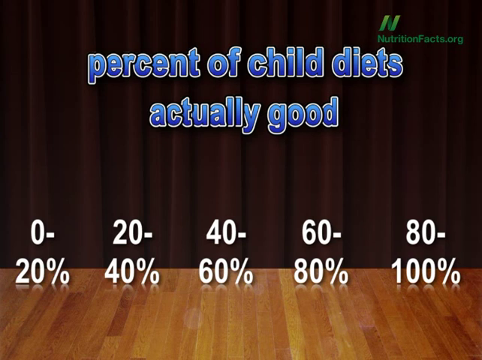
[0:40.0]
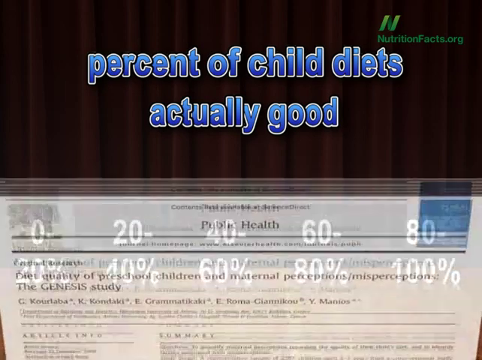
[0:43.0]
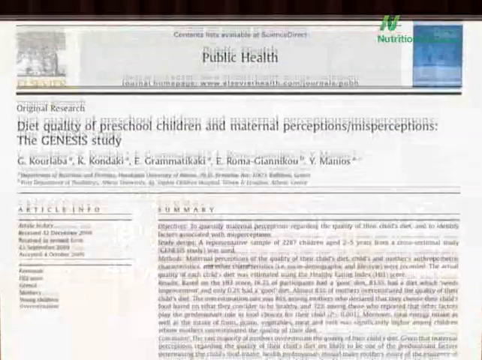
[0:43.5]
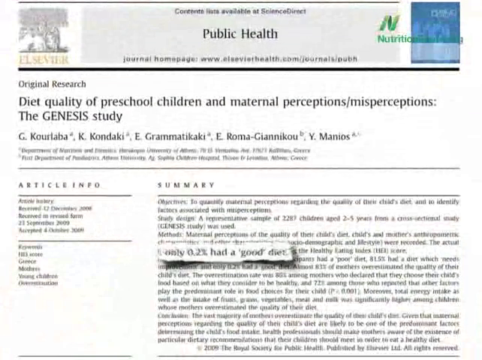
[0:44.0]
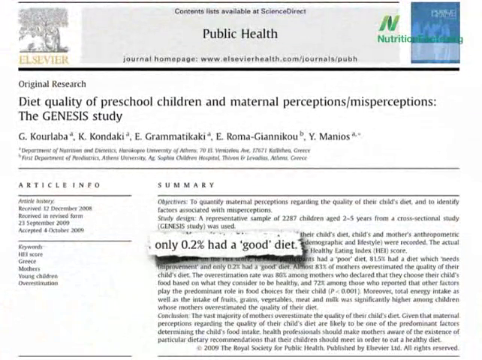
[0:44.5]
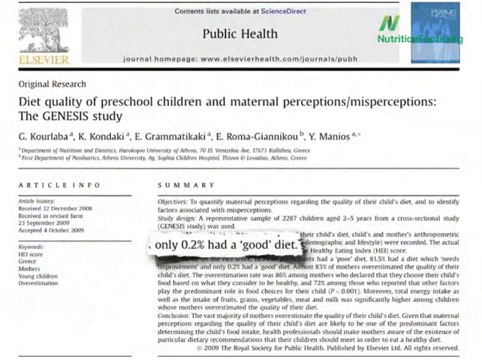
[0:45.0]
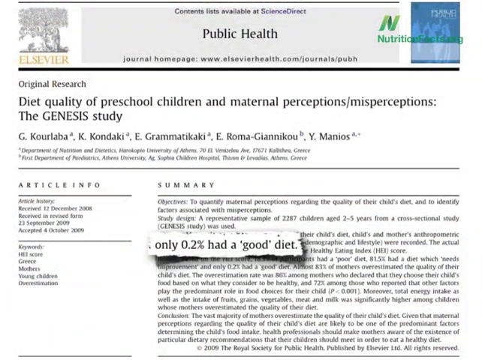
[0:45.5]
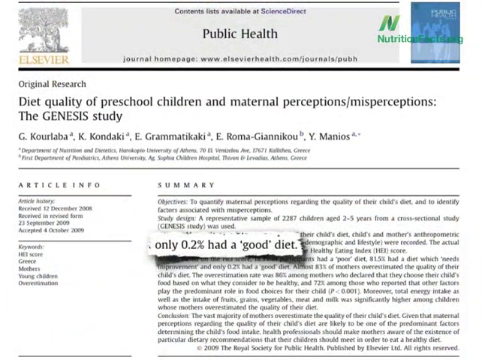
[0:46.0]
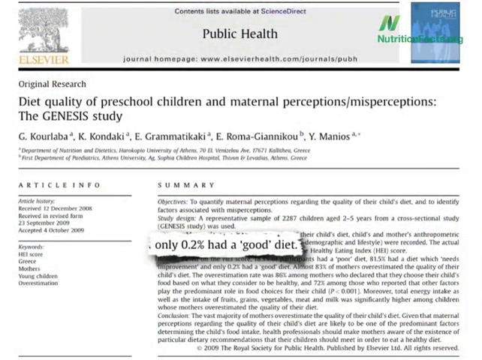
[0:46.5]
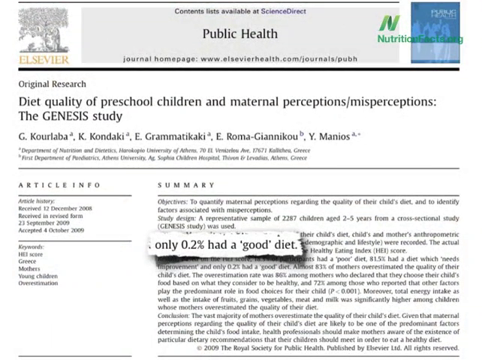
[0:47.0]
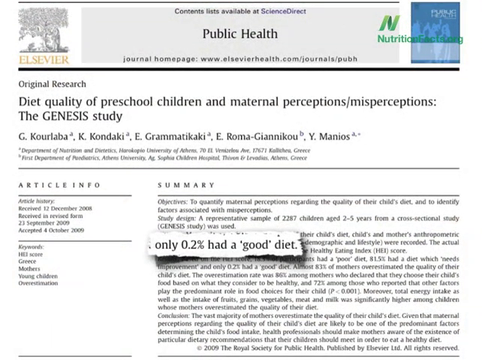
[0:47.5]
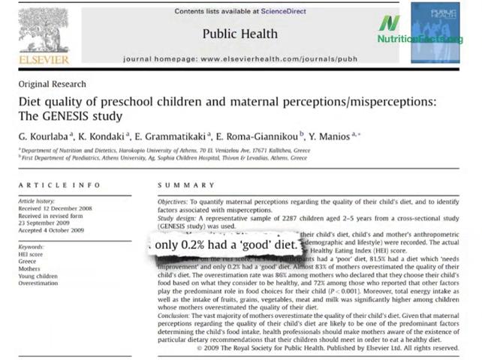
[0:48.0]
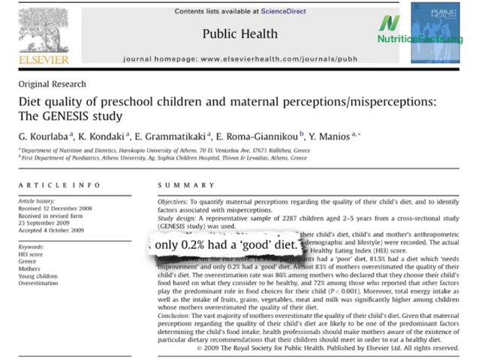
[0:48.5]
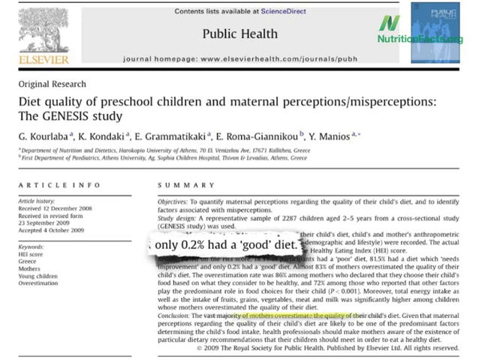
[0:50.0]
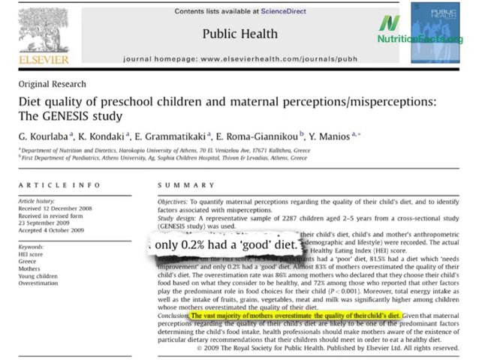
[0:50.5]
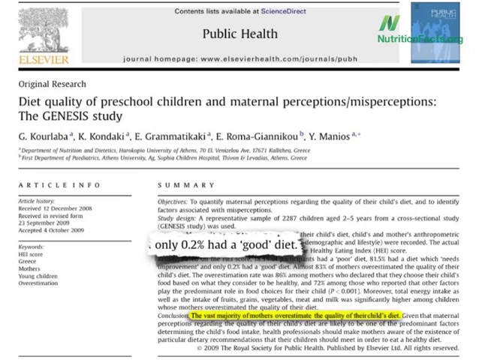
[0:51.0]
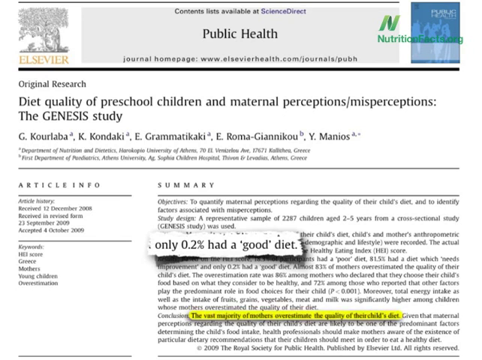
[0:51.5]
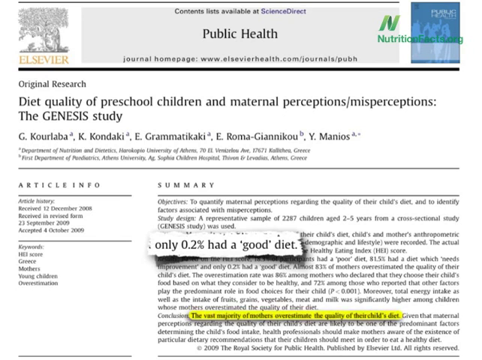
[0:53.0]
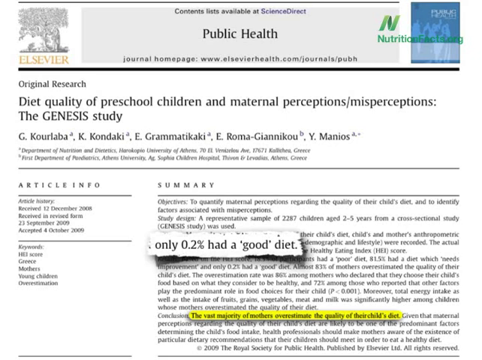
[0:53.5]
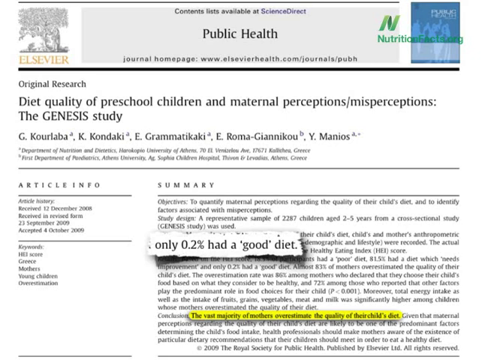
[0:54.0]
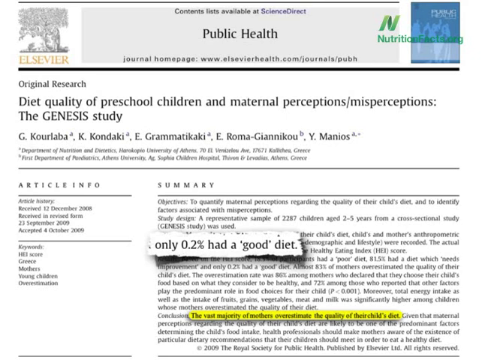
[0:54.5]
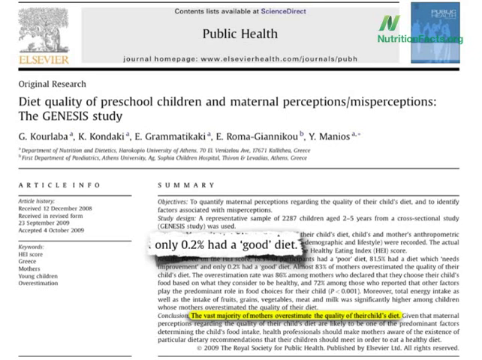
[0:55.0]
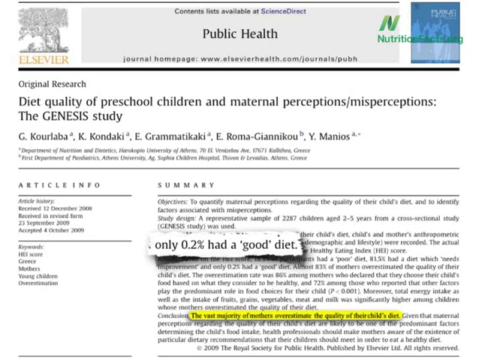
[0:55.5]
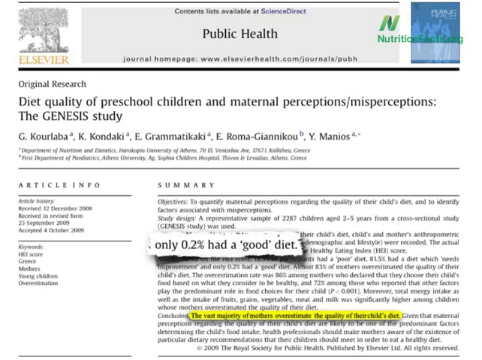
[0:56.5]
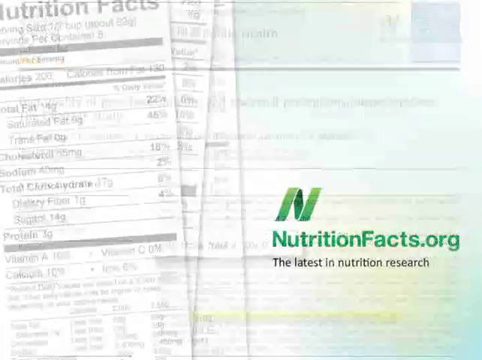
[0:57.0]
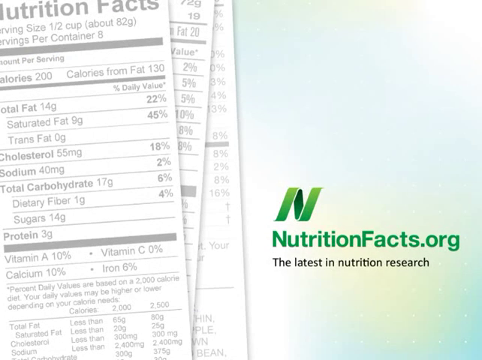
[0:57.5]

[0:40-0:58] The same presentation style continues, now showing multiple percentages for the percent of child diets that are actually good. Then a second article appears, reading "only 0.2% had a good diet," apparently indicating where actual diets fall on the scale, the opposite of what most moms think.